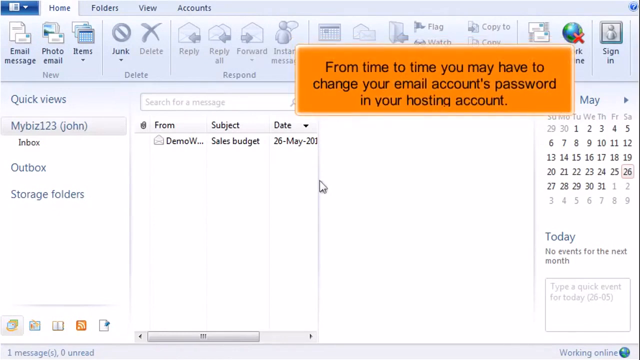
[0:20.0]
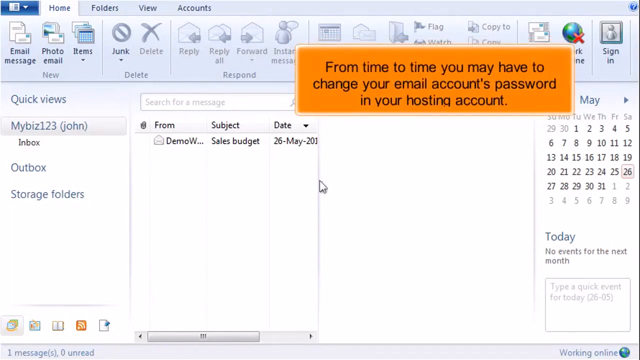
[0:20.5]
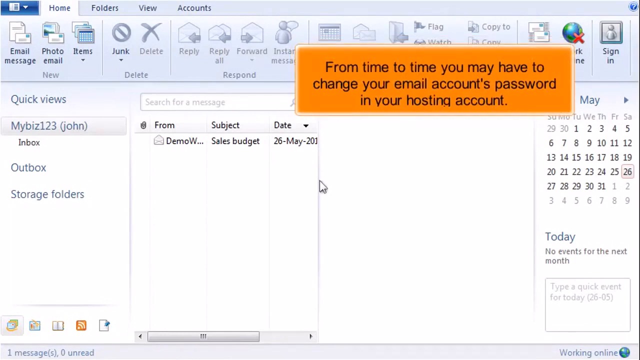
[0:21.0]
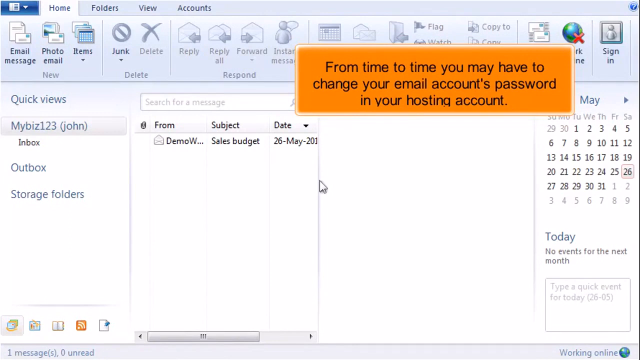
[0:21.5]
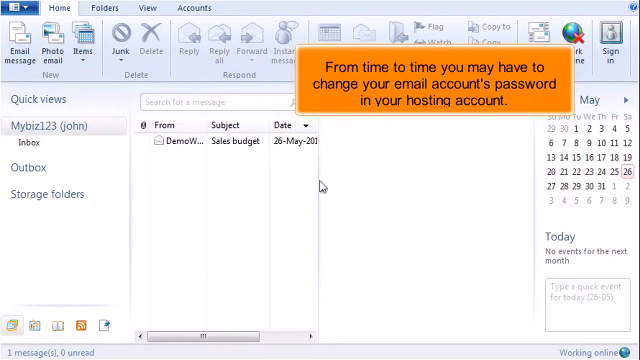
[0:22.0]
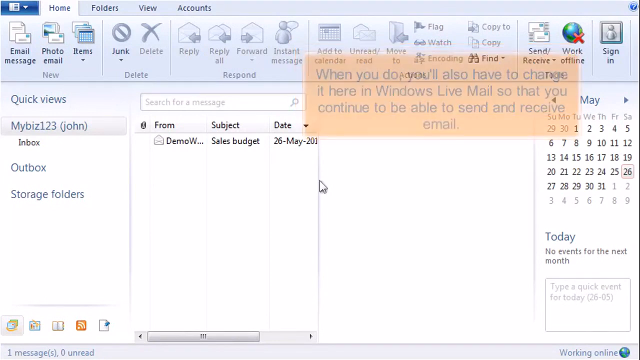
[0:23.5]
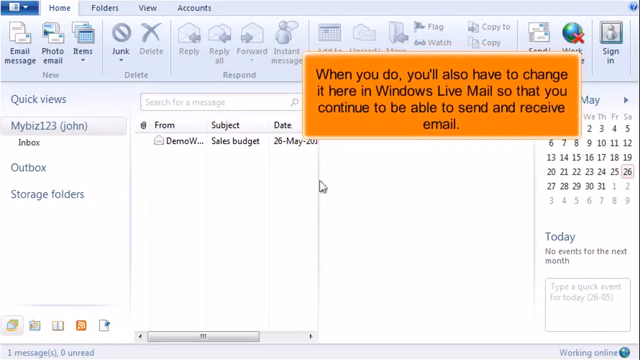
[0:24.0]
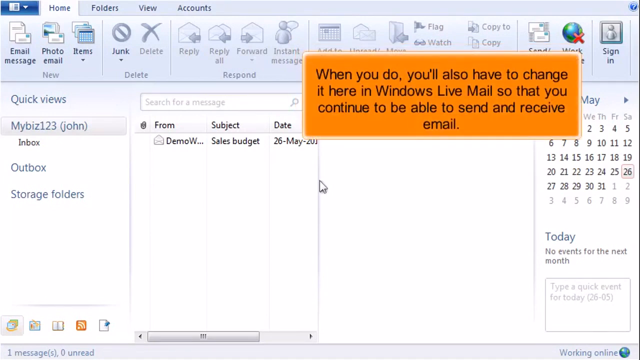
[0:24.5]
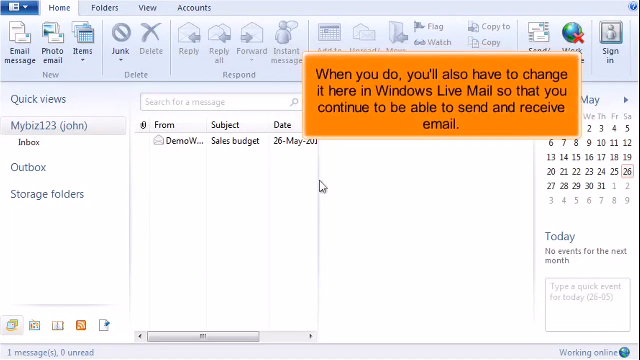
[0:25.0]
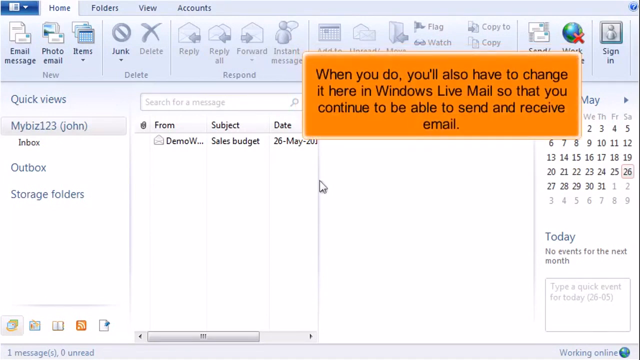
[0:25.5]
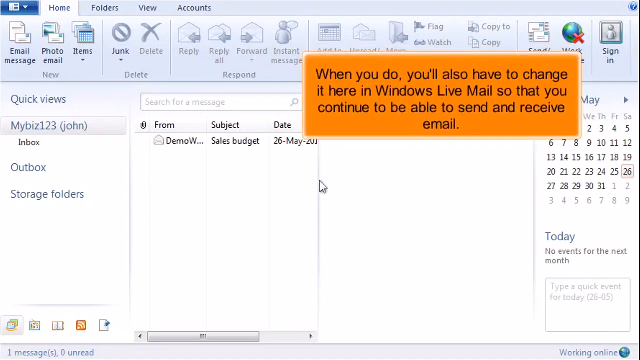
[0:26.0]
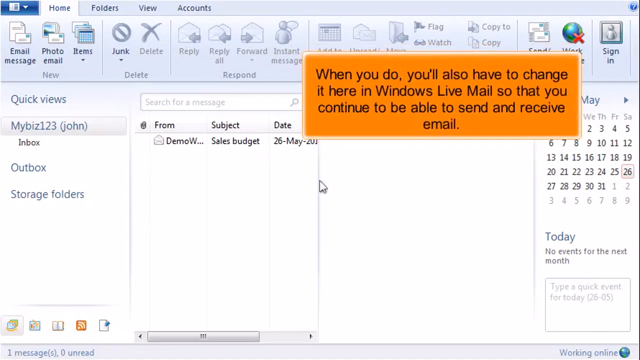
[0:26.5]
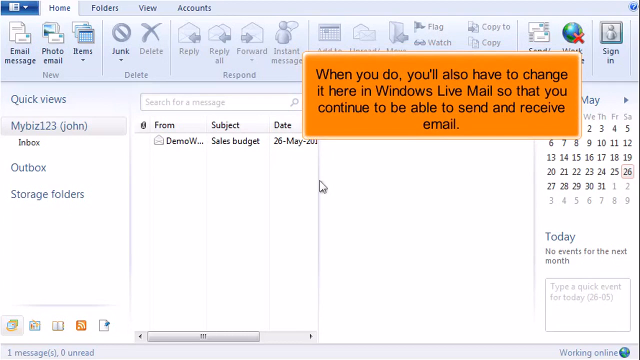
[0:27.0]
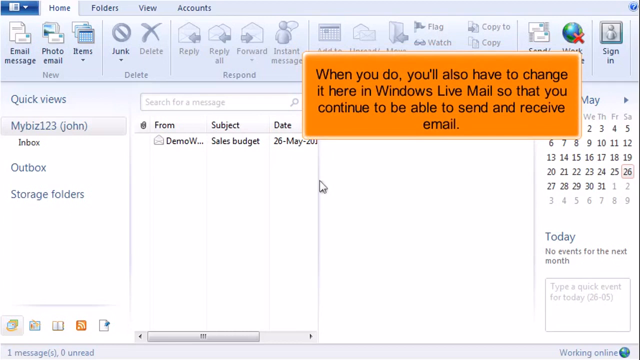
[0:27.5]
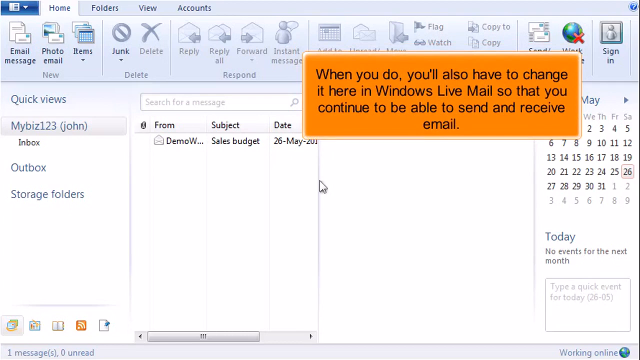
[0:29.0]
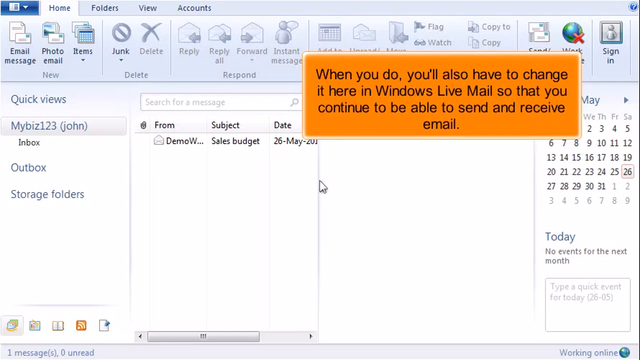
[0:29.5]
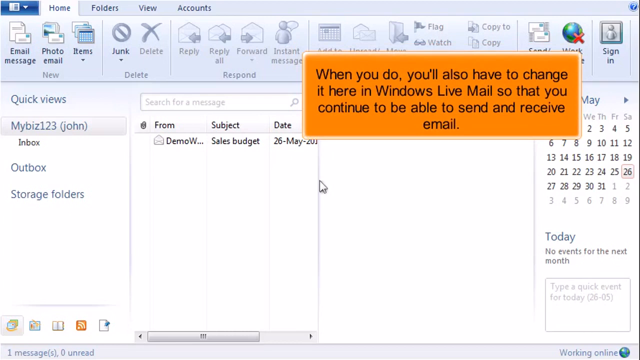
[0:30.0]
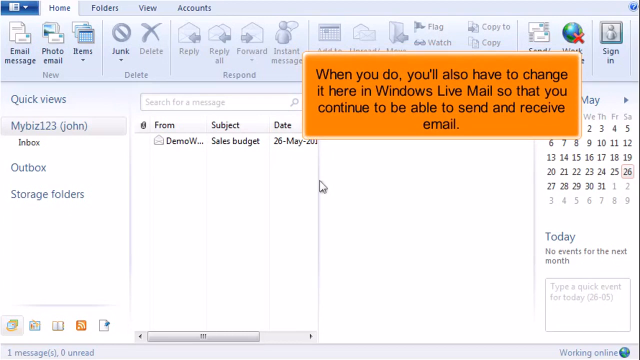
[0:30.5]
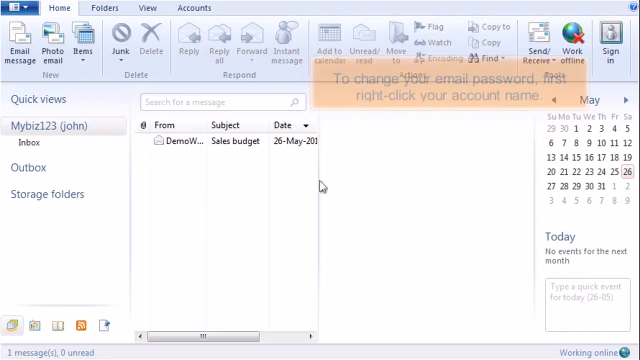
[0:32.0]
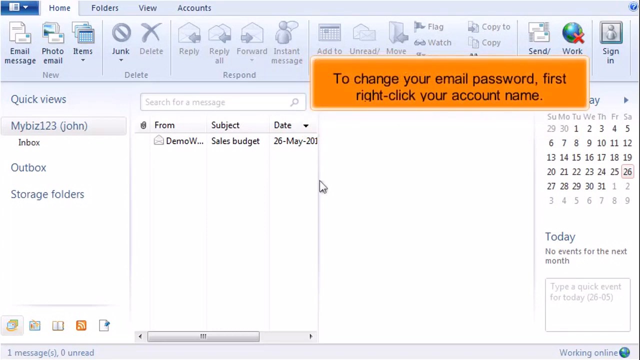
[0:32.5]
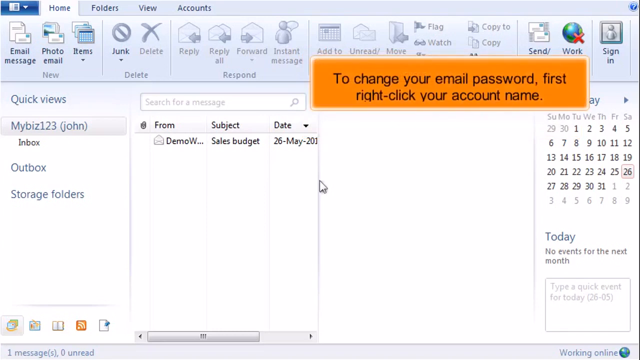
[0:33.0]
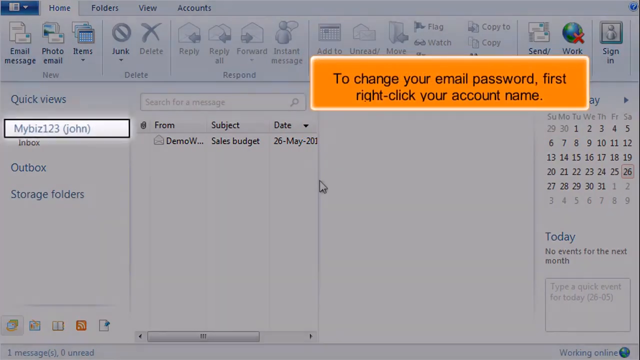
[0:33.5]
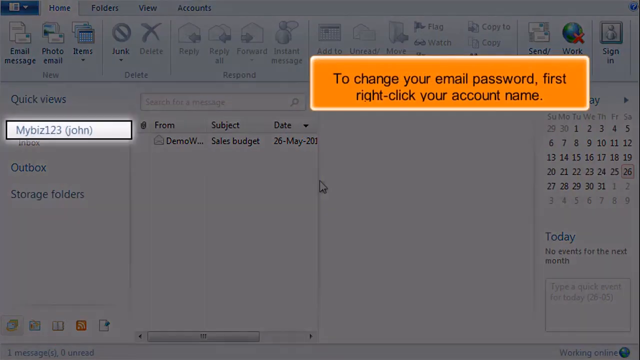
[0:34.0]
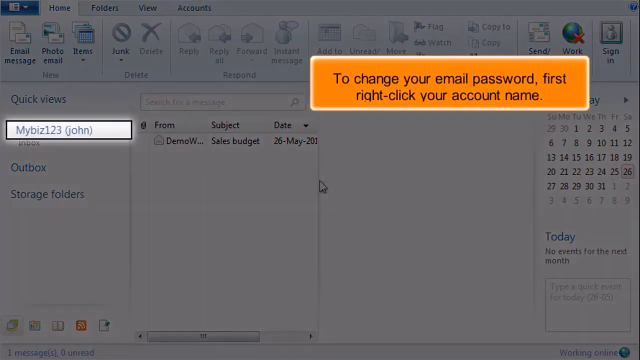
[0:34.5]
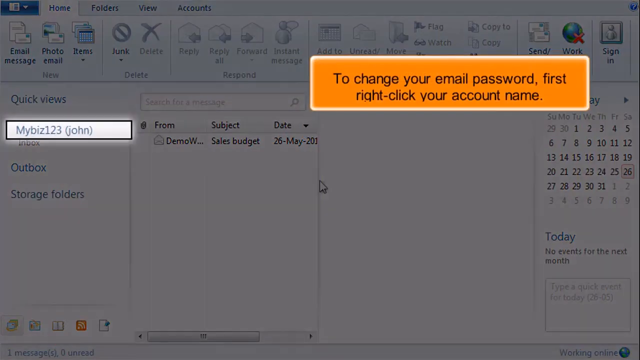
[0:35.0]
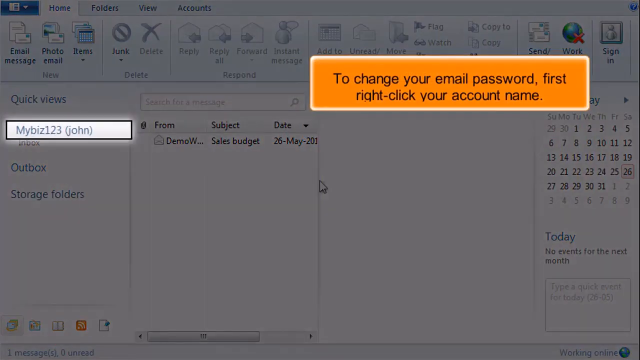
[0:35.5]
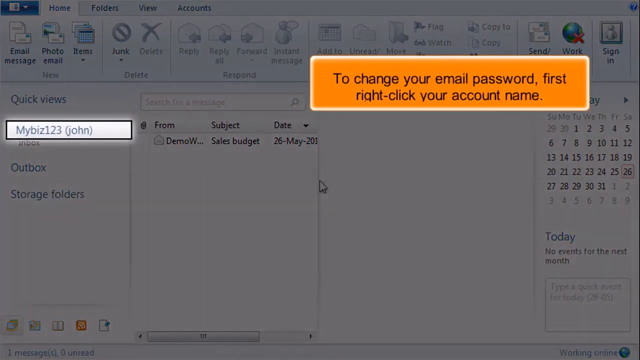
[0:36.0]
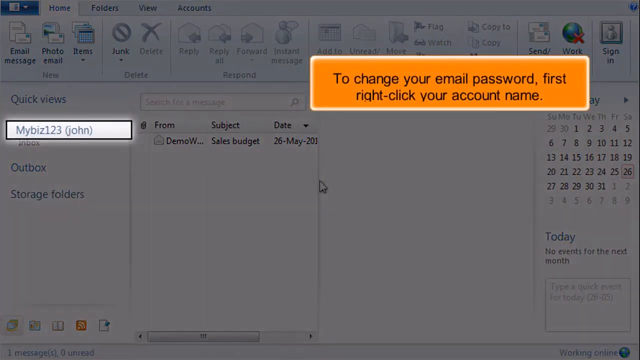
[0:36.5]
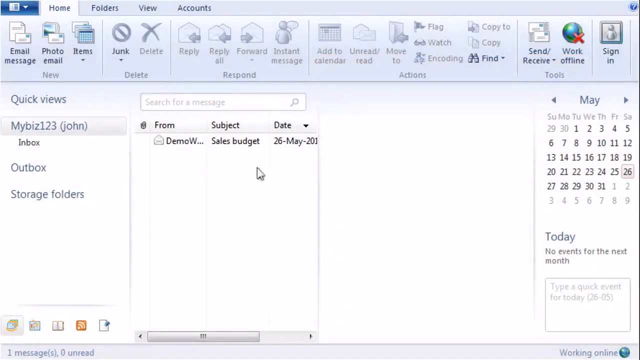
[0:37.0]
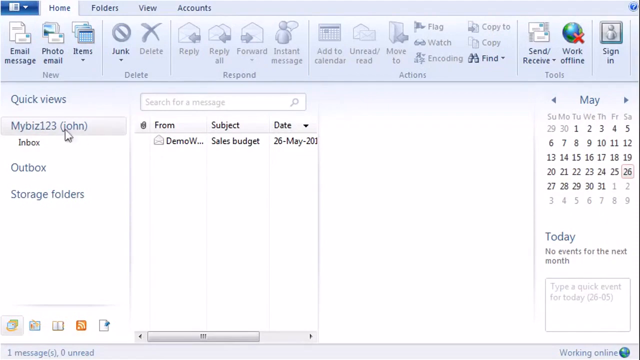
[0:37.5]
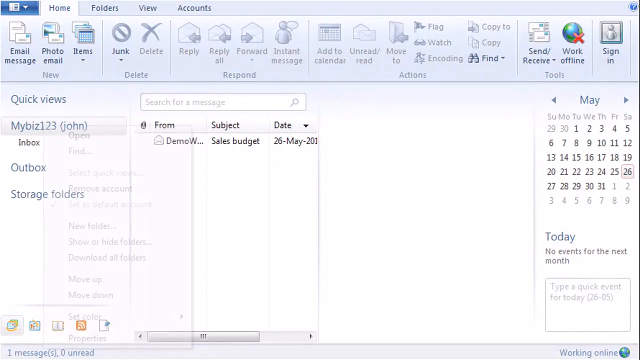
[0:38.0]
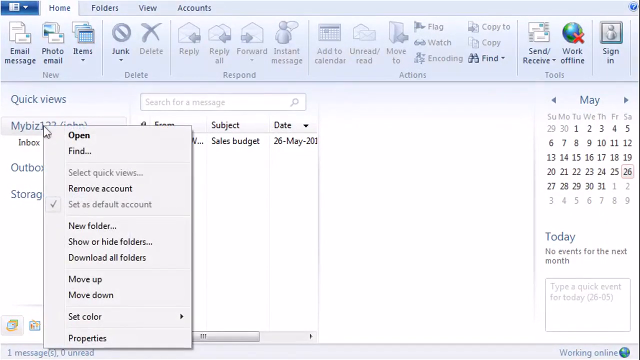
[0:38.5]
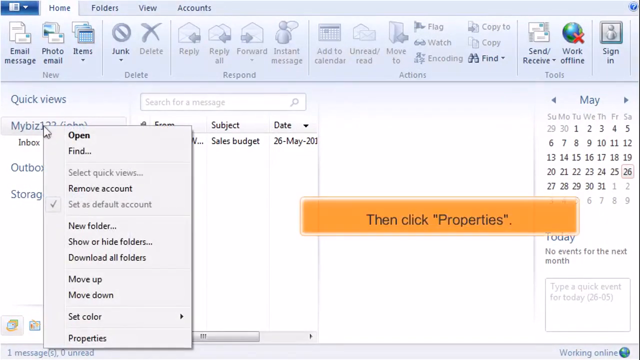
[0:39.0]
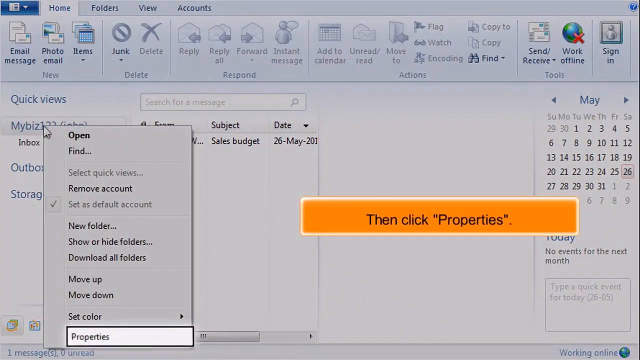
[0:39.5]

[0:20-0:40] This tutorial video hosted by Hostpapa shows how to change an email password in Windows Live Mail. Windows Live Mail has already been launched, showing the main screen of the email page. To change the password, the user's name on the left-hand side is right-clicked, then properties is clicked. Next the servers tab is clicked, then the password is clicked and changed, and then save is clicked.